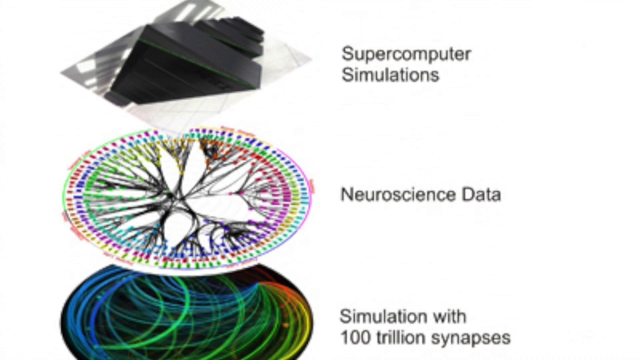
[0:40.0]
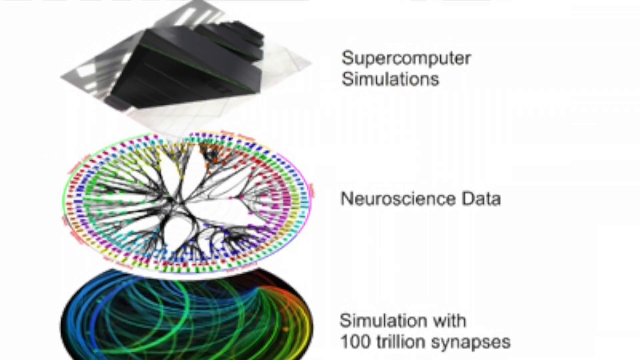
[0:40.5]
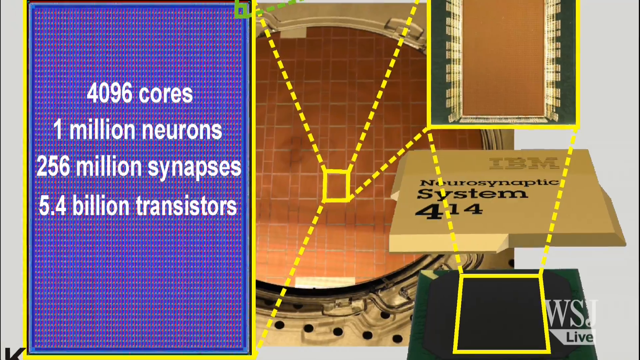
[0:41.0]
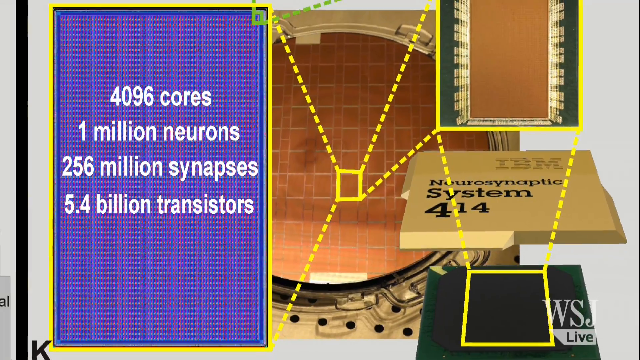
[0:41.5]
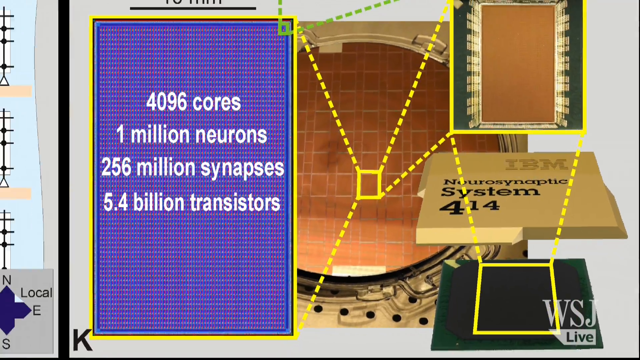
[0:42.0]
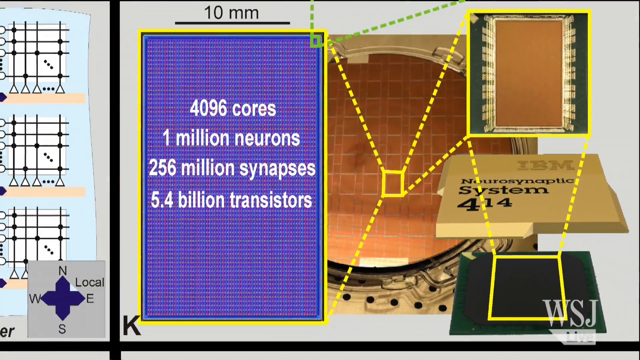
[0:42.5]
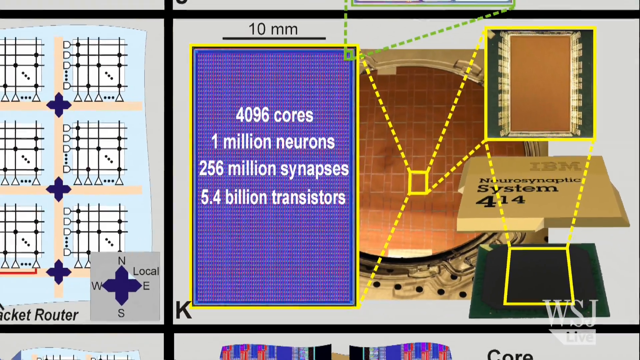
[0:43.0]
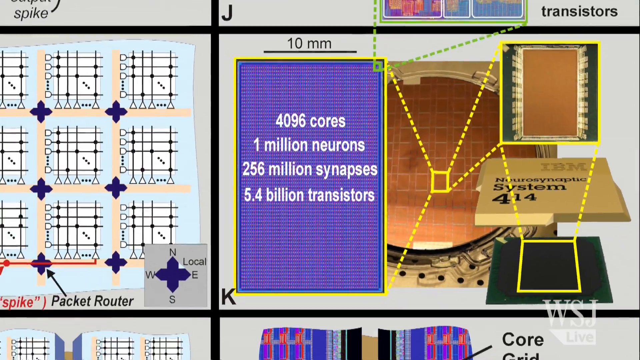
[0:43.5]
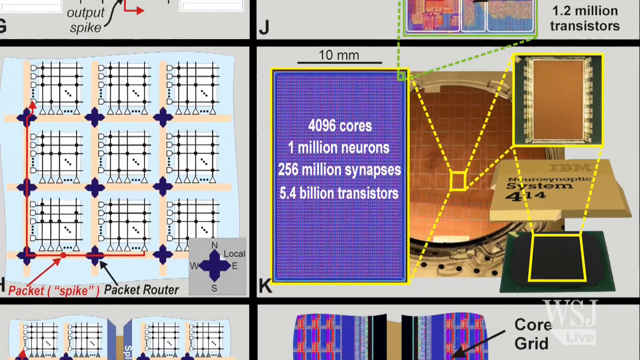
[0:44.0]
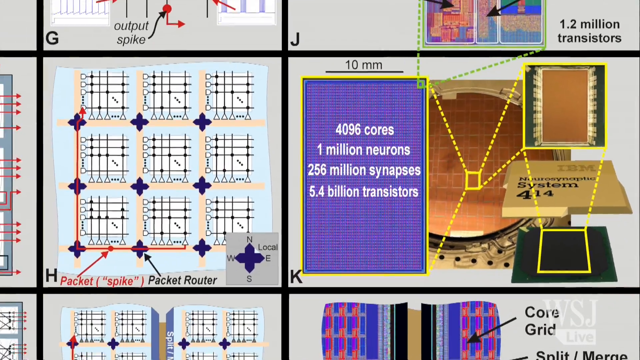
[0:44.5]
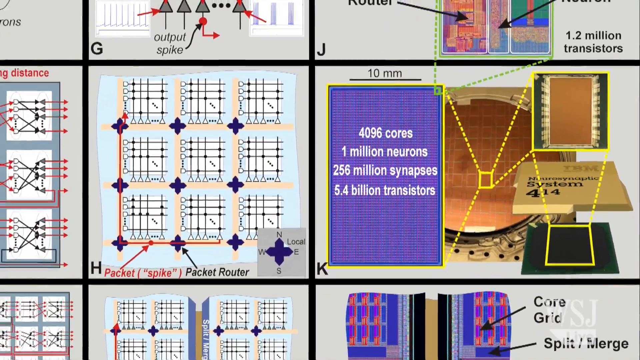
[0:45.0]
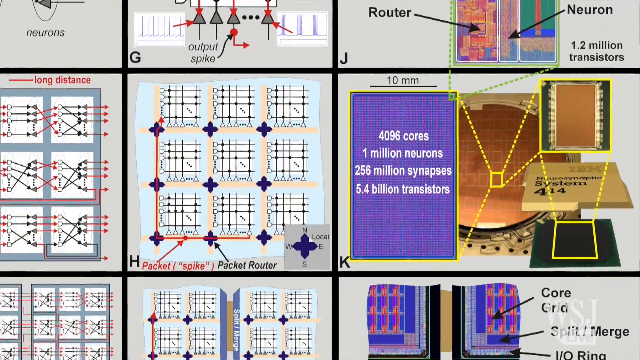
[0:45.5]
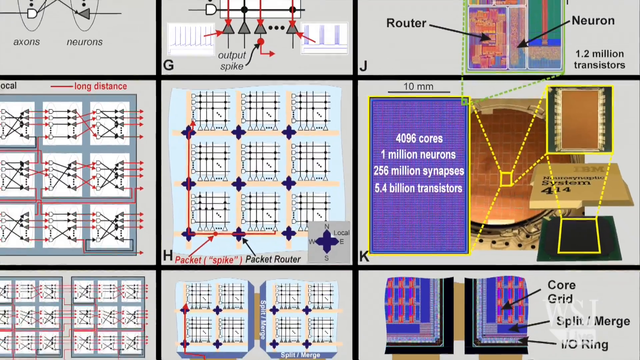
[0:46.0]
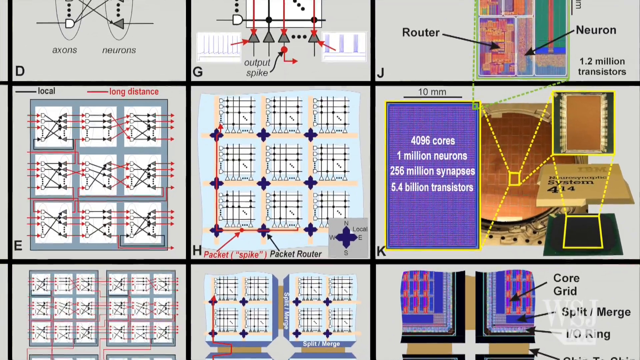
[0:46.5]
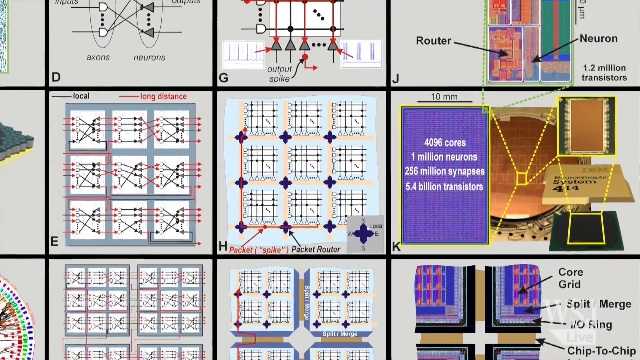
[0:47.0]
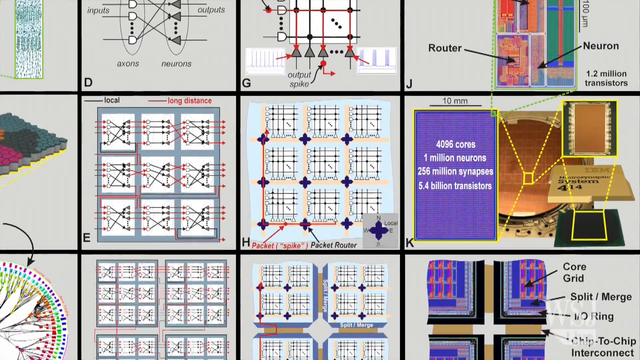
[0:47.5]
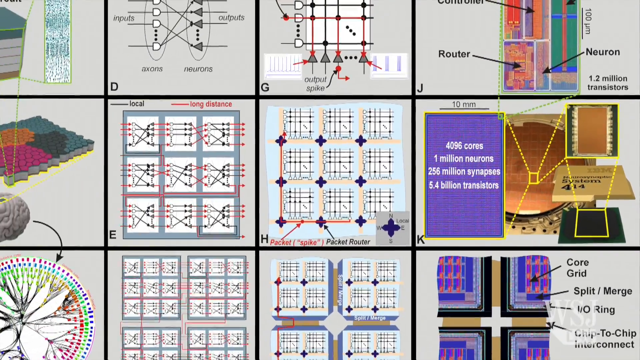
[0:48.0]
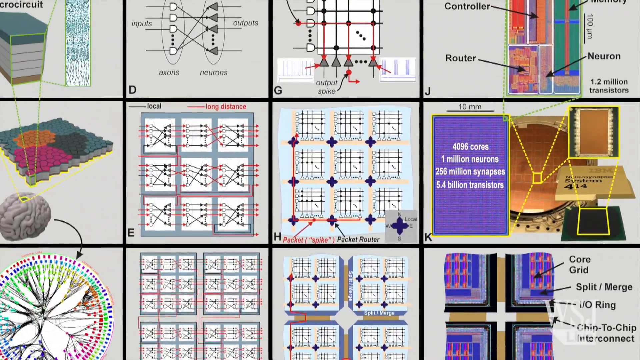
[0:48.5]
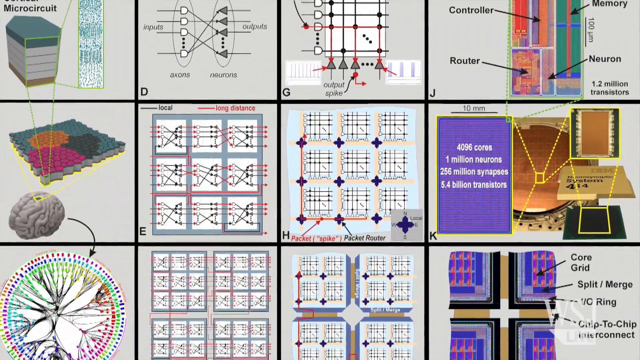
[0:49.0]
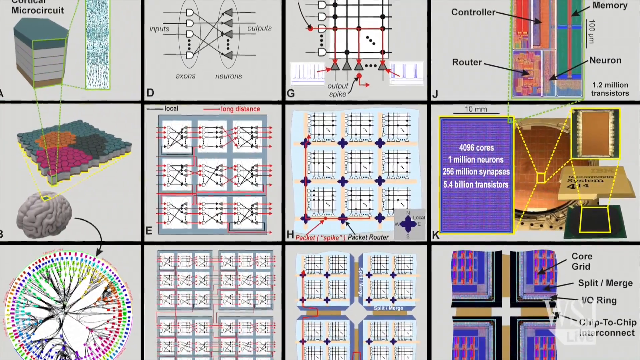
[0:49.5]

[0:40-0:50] Other chips show their cores and neurons, seemingly illustrating how they are designed and what they look like inside: 4096 cores, 1 million neurons, 256 million synapses and 5.4 billion transistors. There are routers, neurons and transistors with output spikes and input spikes. The chips are not all the same: some are square, some plain and some round. The plain ones are grey and the square ones are white.